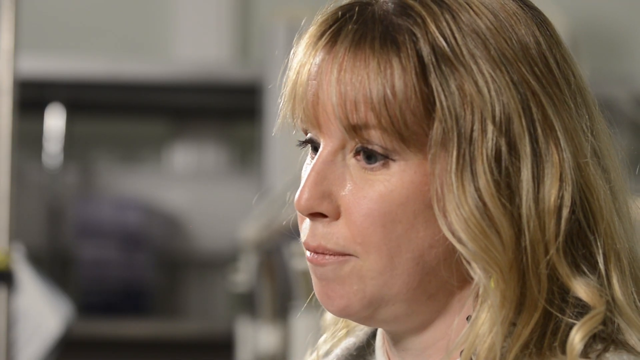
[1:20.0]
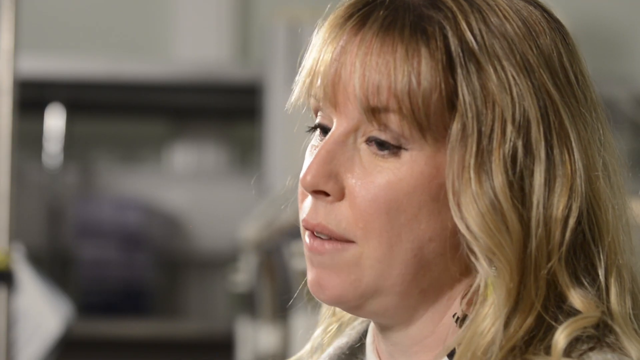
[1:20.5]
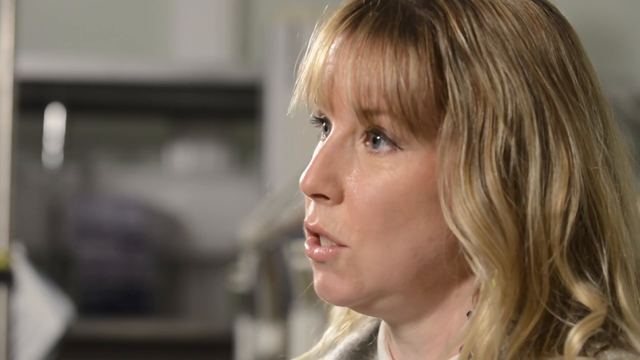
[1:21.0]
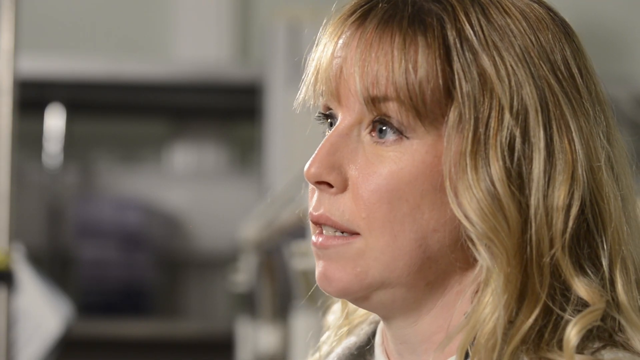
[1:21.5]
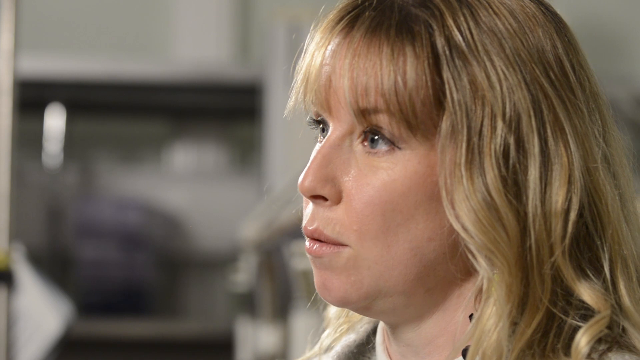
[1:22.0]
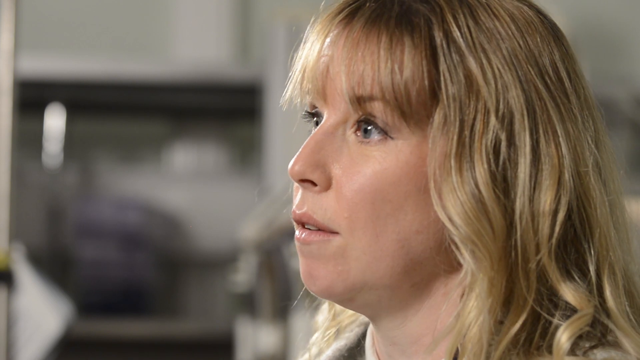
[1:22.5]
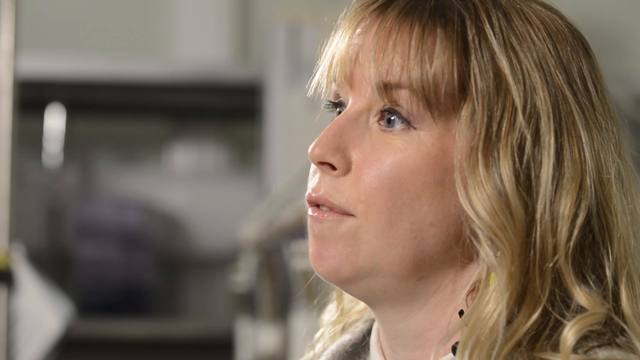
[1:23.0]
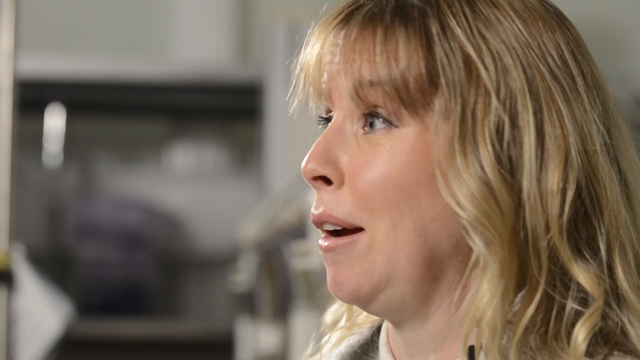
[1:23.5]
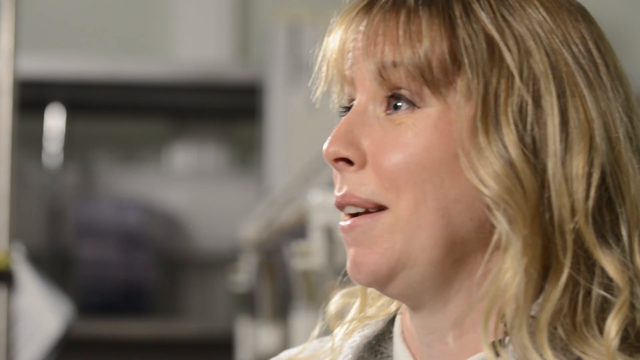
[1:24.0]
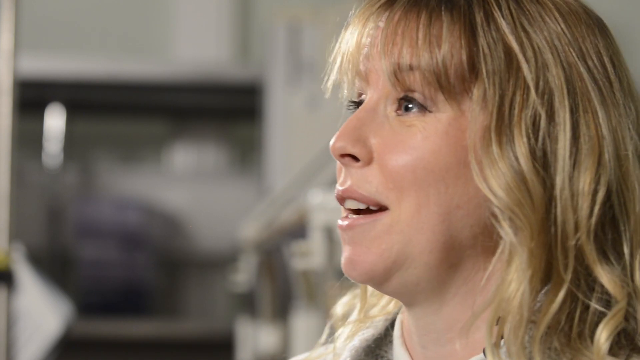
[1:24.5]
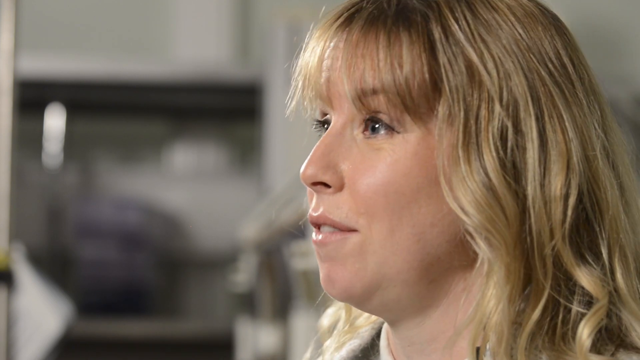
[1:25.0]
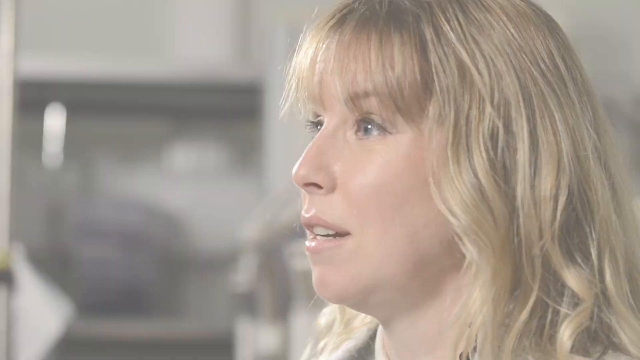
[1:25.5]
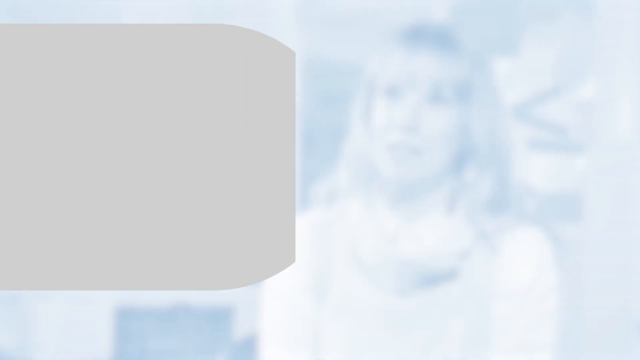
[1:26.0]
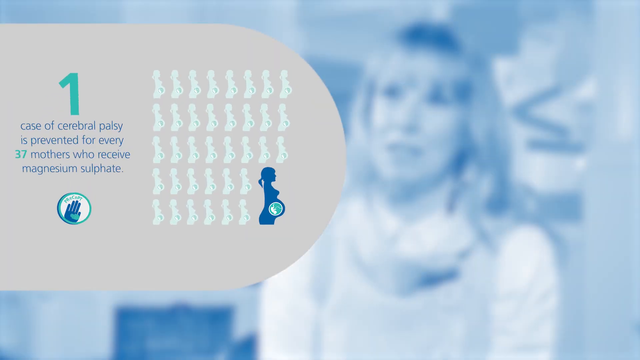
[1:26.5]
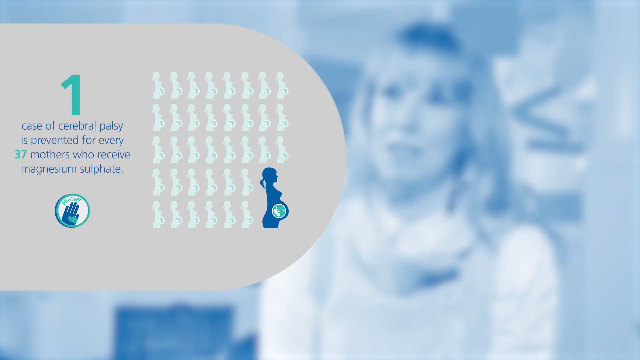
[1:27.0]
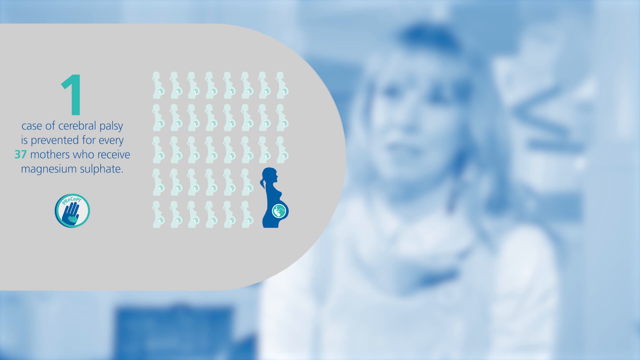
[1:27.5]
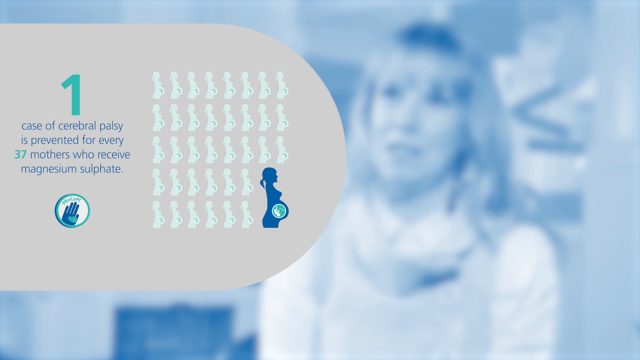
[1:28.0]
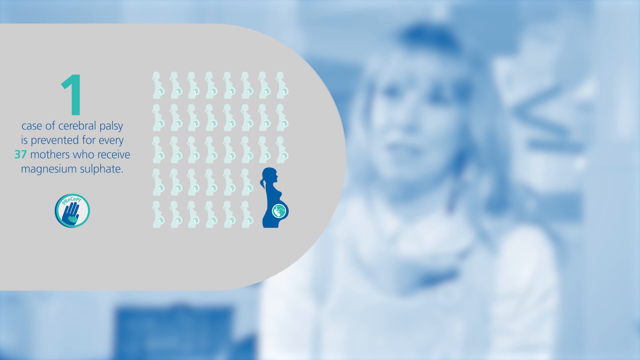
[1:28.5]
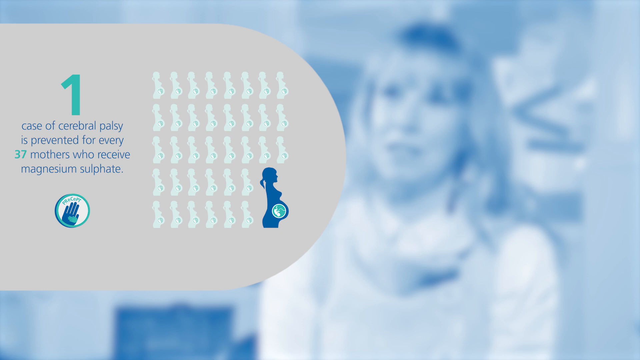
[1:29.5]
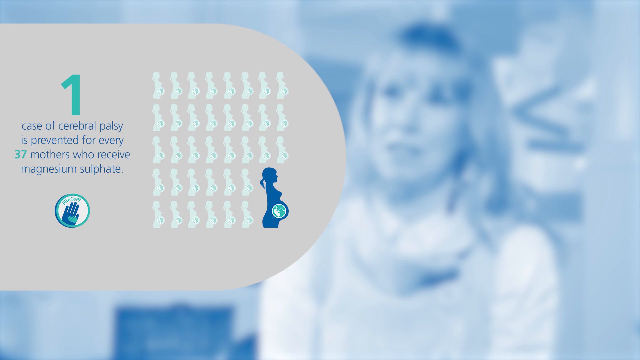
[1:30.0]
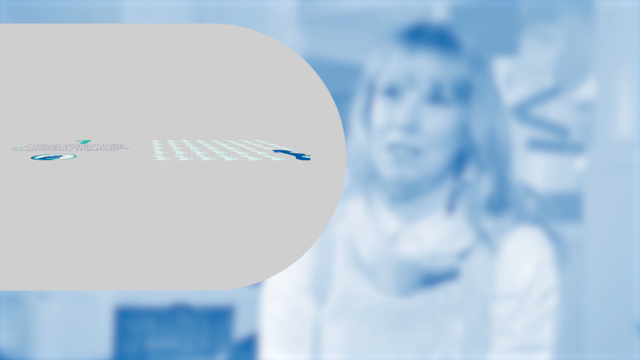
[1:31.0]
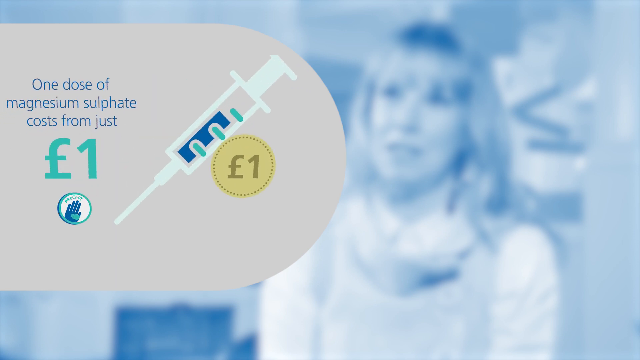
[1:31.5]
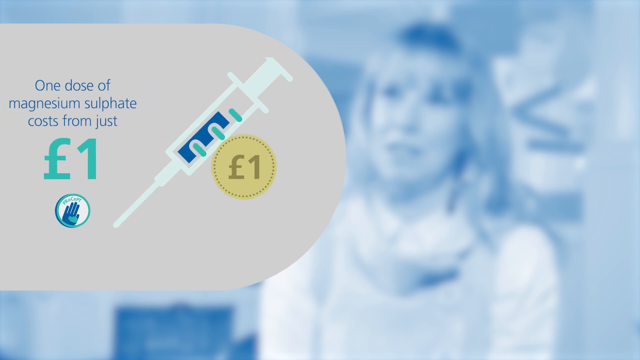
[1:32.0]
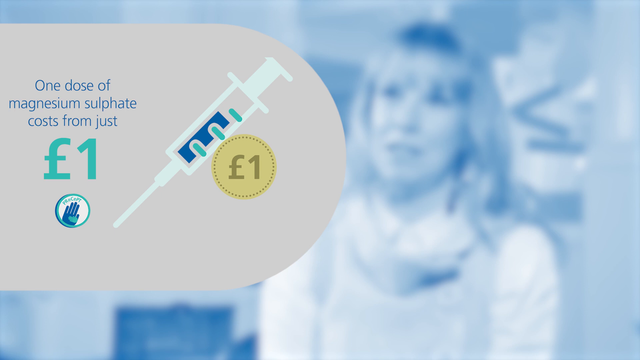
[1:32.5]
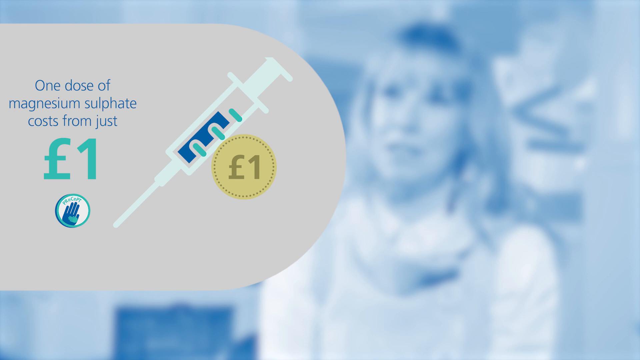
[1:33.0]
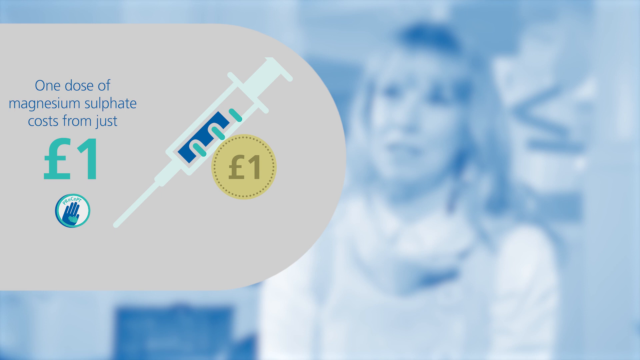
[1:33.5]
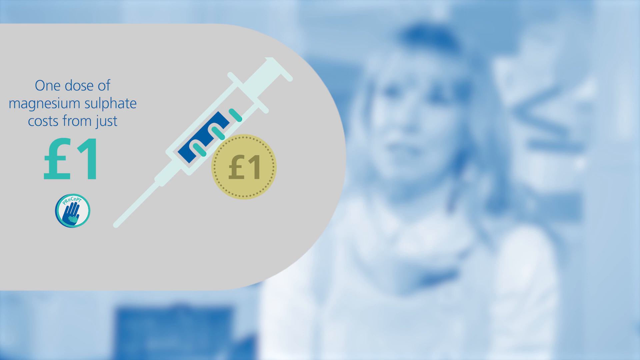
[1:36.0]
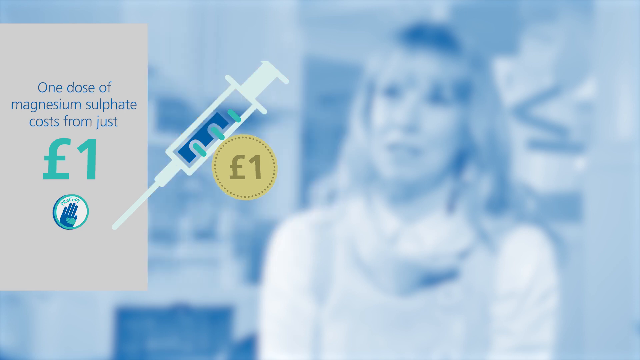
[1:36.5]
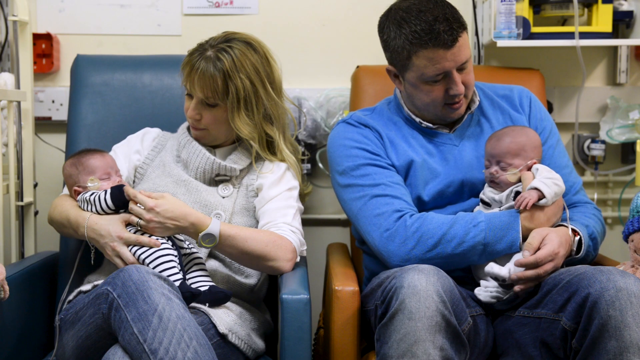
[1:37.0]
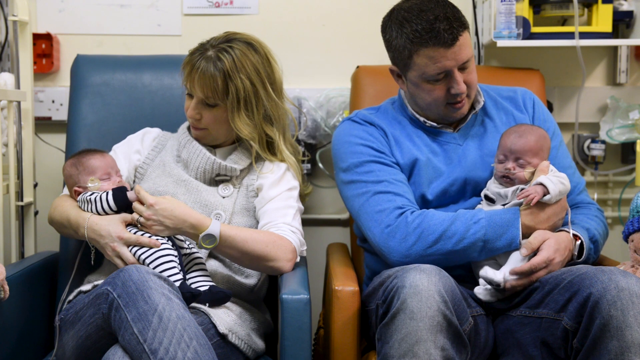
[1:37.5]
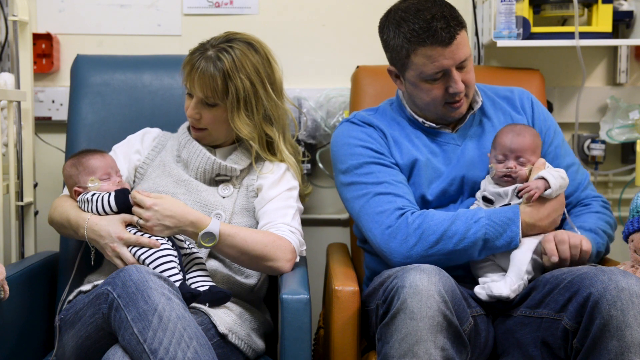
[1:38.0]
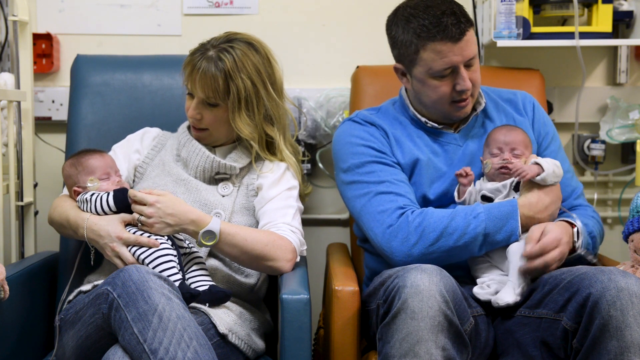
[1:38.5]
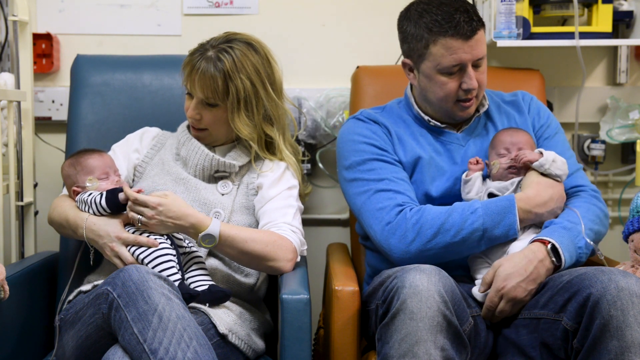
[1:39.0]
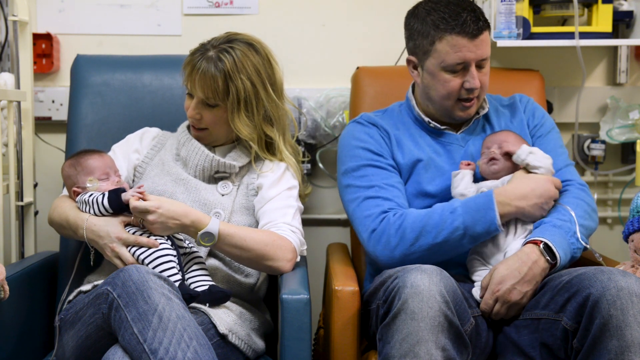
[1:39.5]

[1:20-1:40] Jenny continues to talk, looking up and down a lot, moving her eyes and speaking quite expressively. An infographic comes back up with Jenny's image in the background, more blurred and made quite transparent, and the grey infographic border on the left-hand side. In a big font it shows the number "1", with smaller dark blue writing underneath: "case of cerebral palsy is prevented for every 37 mothers who receive magnesium sulfate". The number 37 is in turquoise, the same colour as the number 1 at the top. Images of pregnant women follow; there appear to be 37 of them, with one in a darker blue representing the one case for every 37 mothers. The next infographic reads "one dose of magnesium sulfate costs from just one pound", with "one pound" highlighted in turquoise and a picture of a needle to the right with one pound written underneath it. The shot then returns to the two parents, each holding one of their babies.